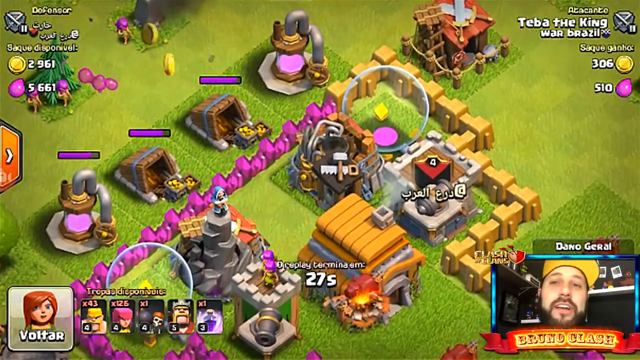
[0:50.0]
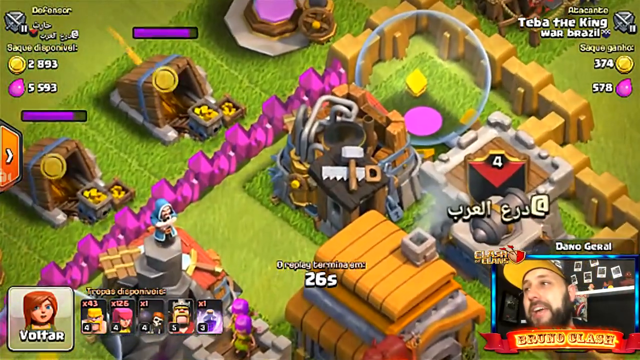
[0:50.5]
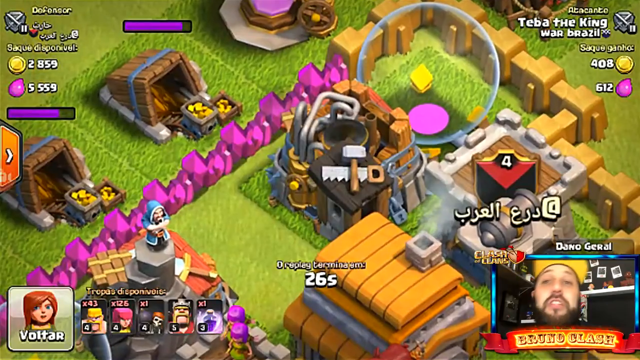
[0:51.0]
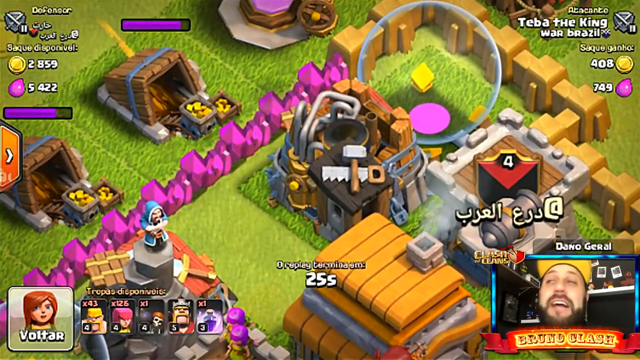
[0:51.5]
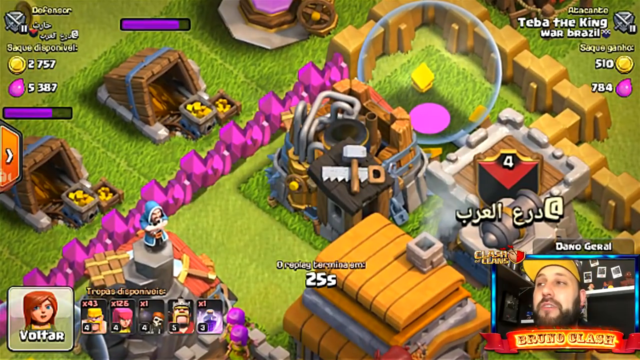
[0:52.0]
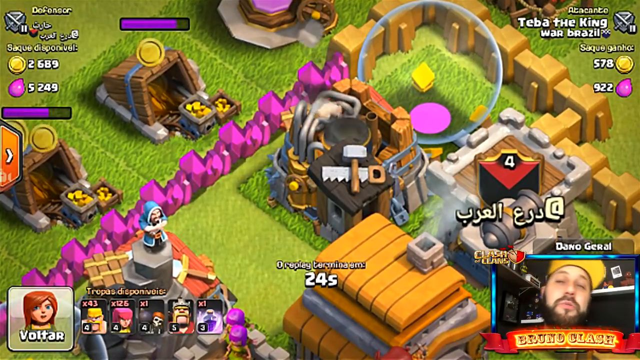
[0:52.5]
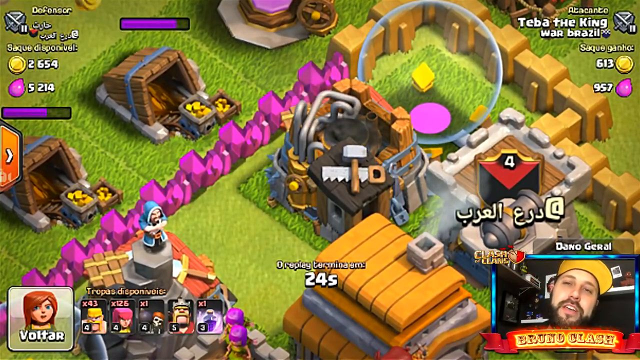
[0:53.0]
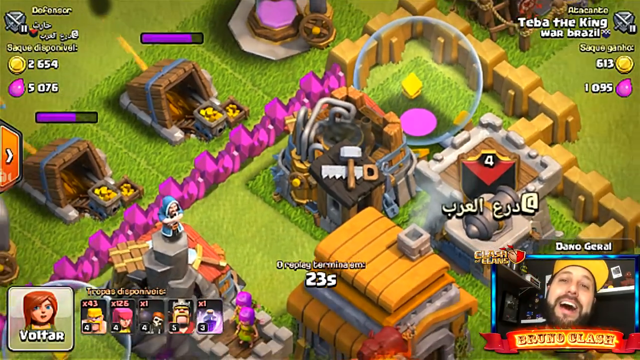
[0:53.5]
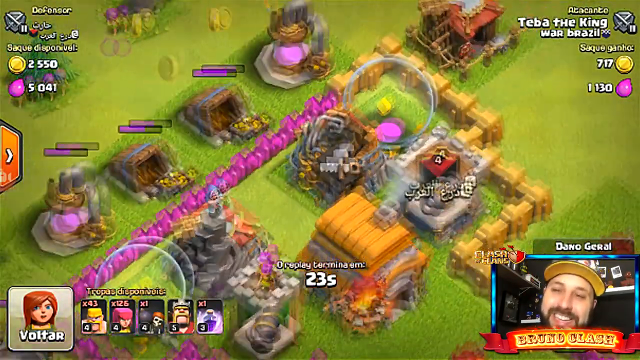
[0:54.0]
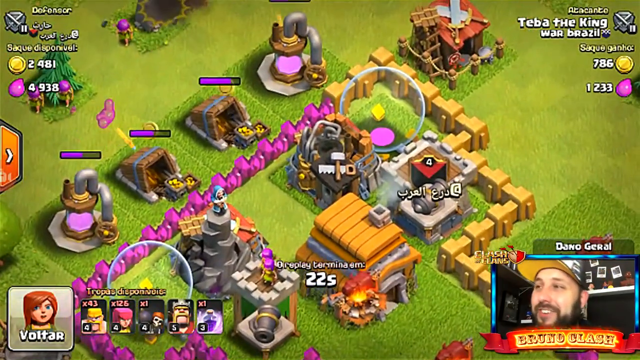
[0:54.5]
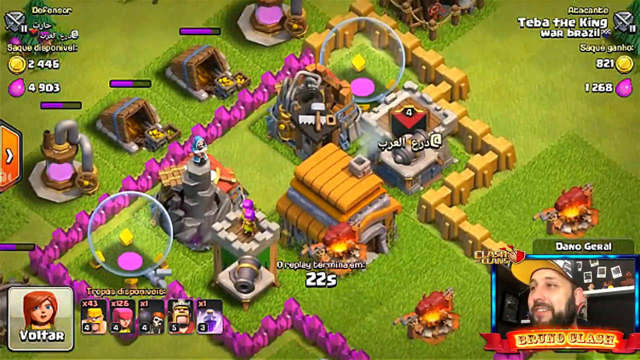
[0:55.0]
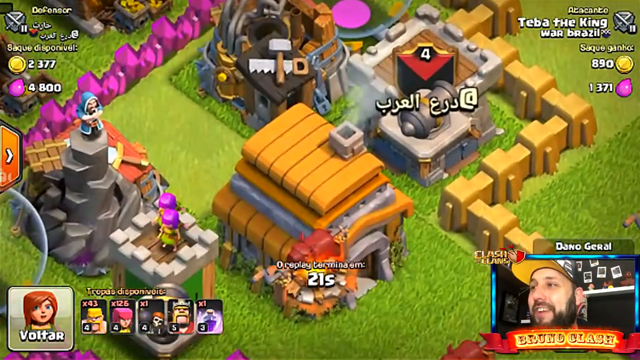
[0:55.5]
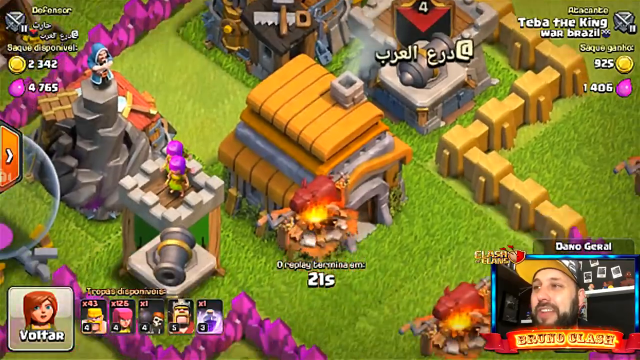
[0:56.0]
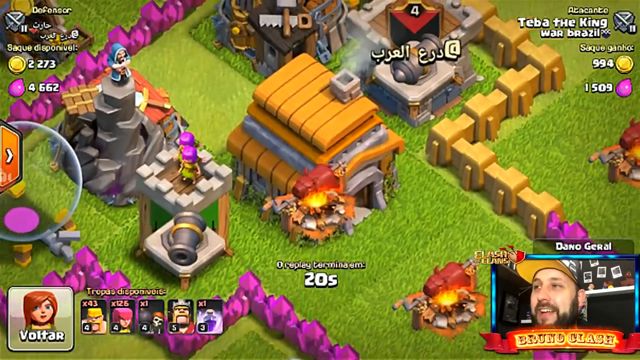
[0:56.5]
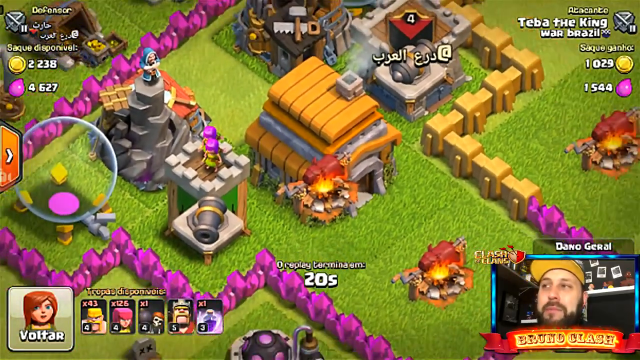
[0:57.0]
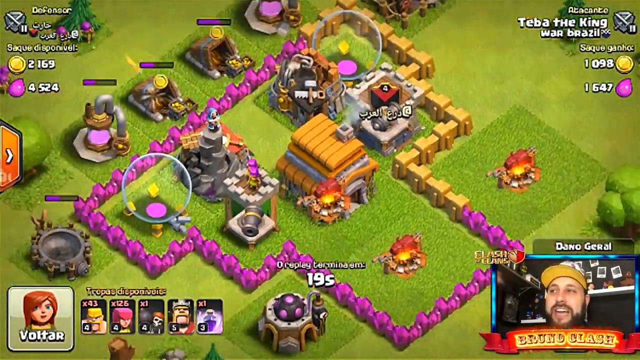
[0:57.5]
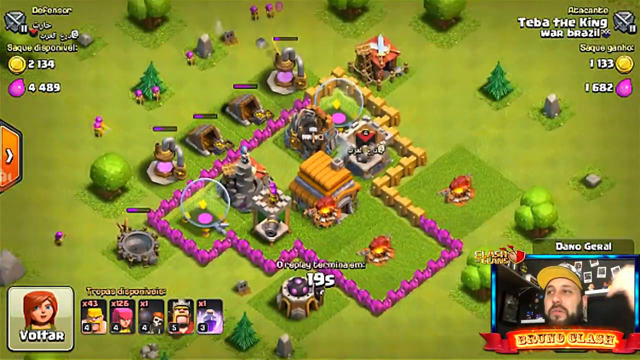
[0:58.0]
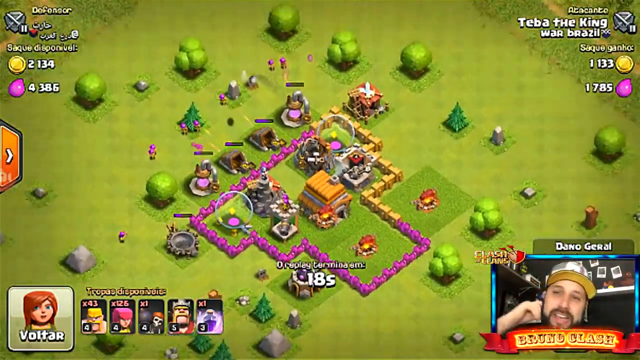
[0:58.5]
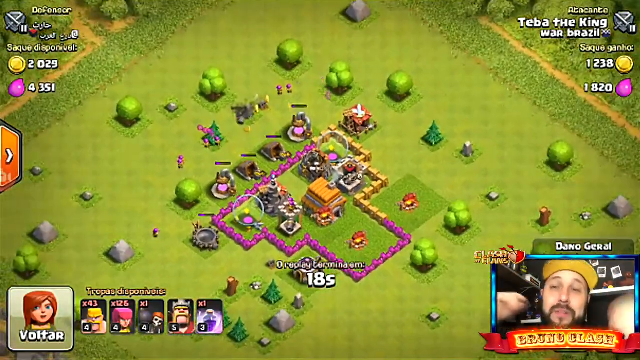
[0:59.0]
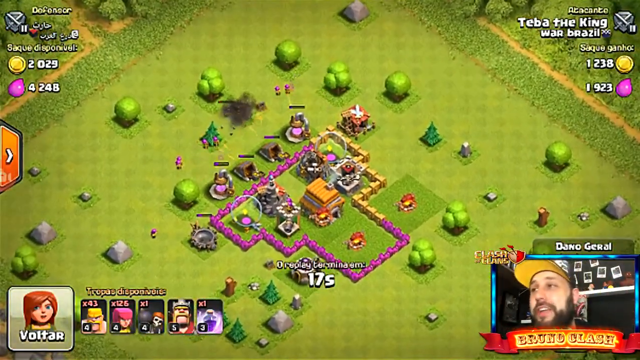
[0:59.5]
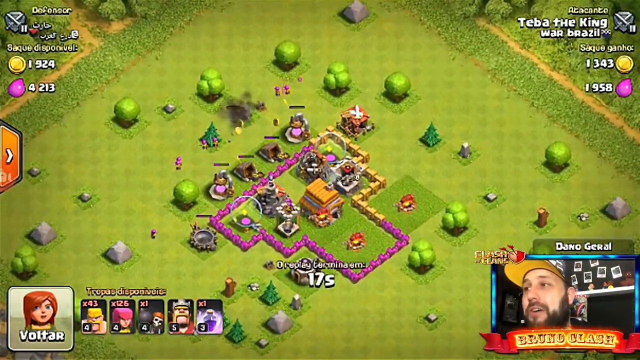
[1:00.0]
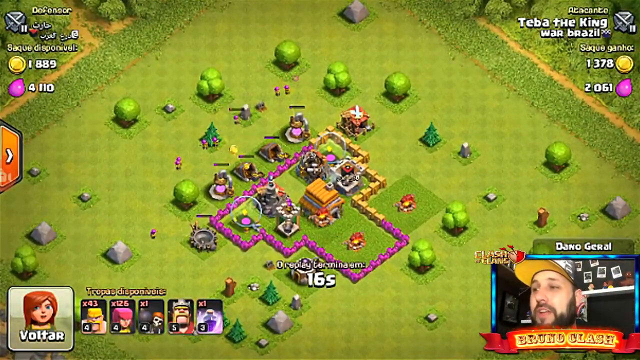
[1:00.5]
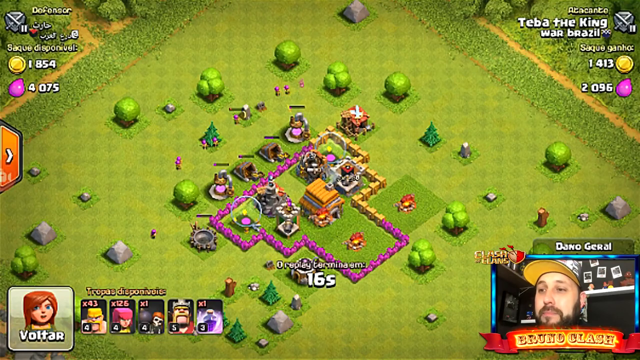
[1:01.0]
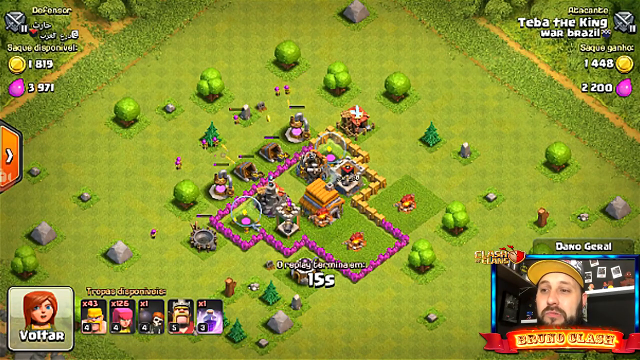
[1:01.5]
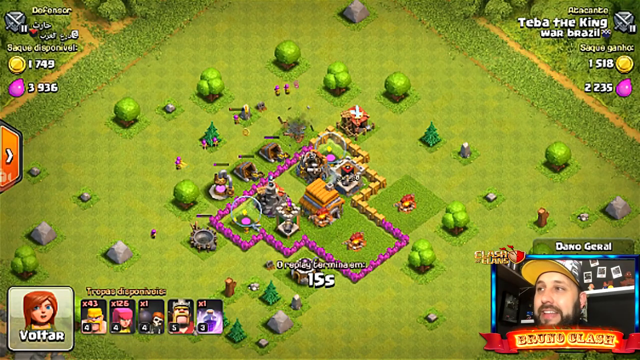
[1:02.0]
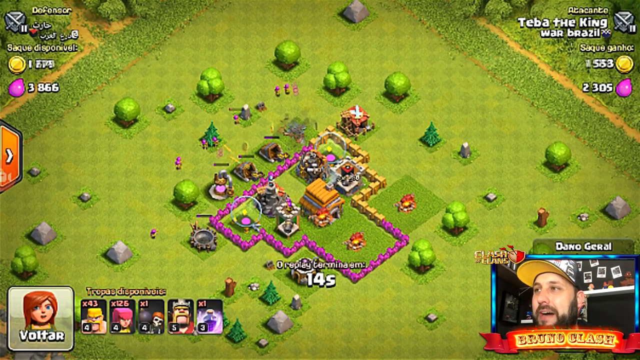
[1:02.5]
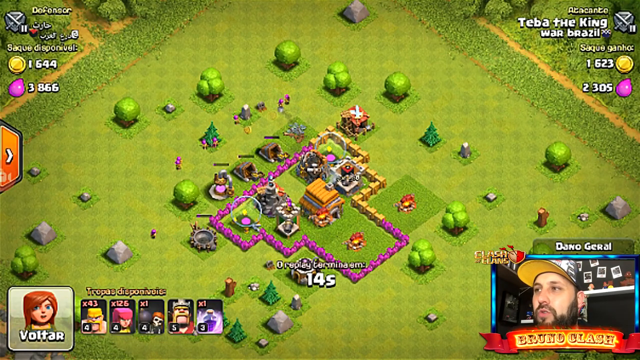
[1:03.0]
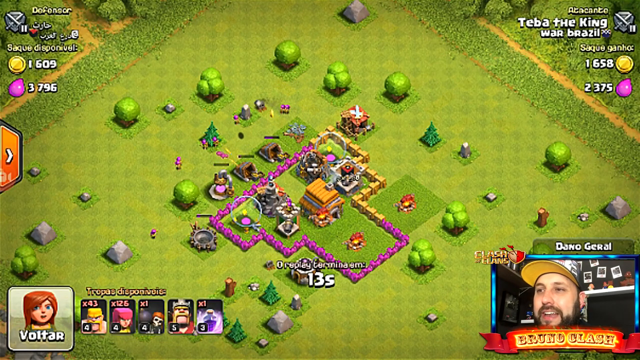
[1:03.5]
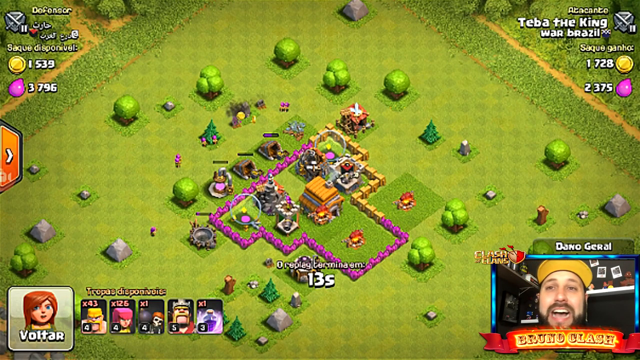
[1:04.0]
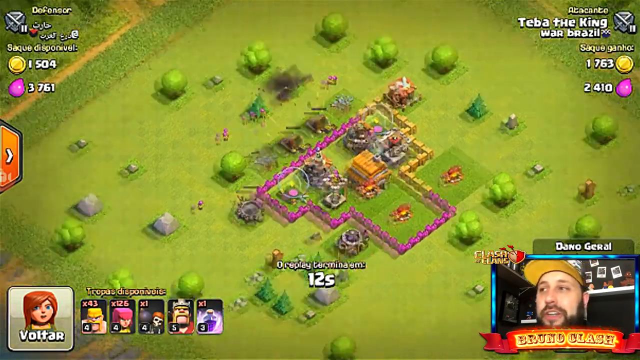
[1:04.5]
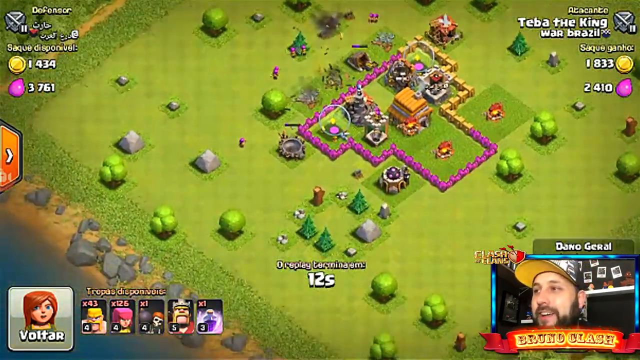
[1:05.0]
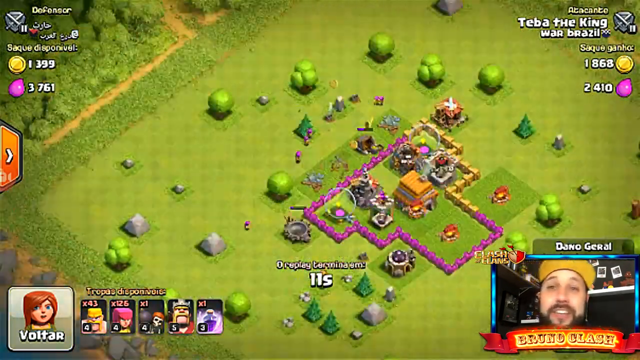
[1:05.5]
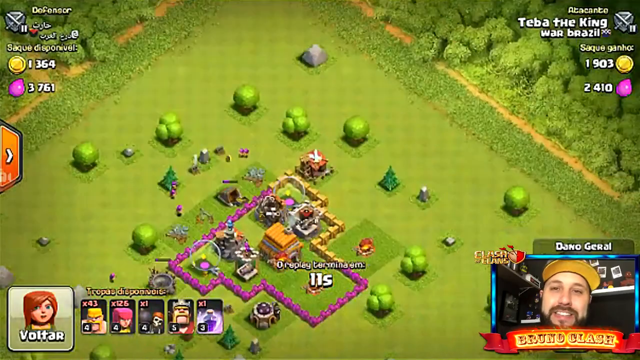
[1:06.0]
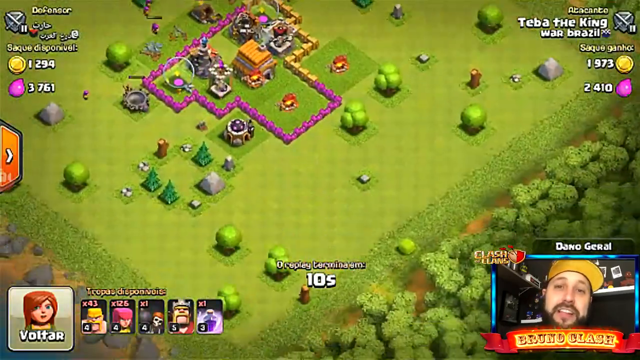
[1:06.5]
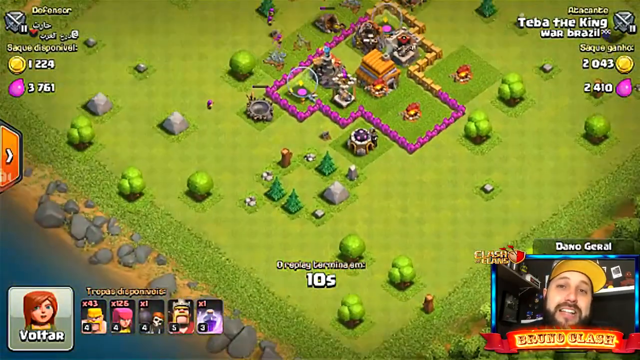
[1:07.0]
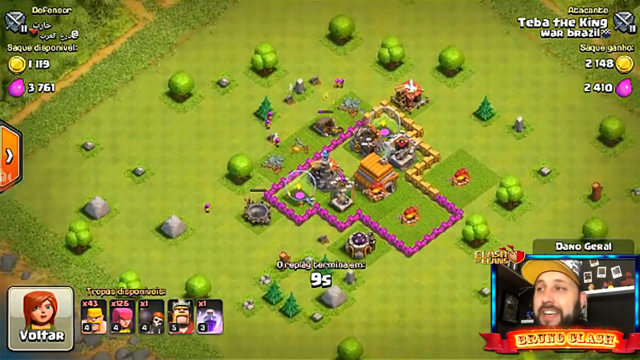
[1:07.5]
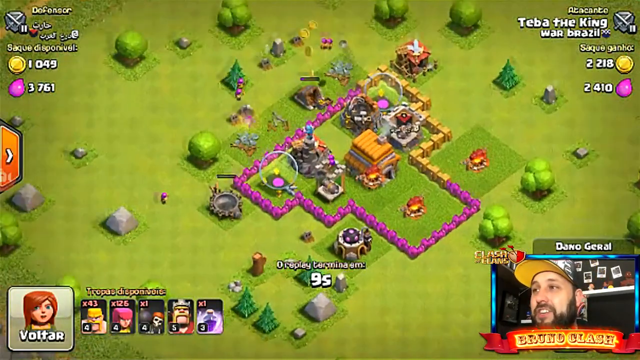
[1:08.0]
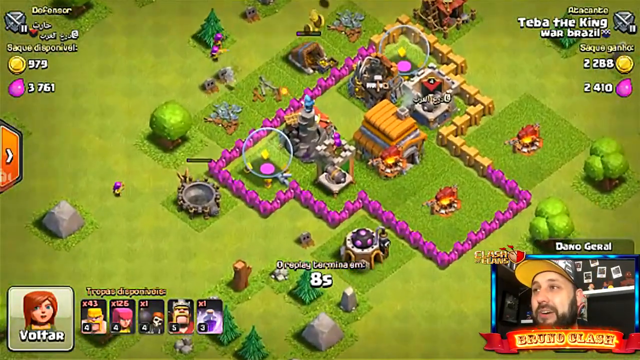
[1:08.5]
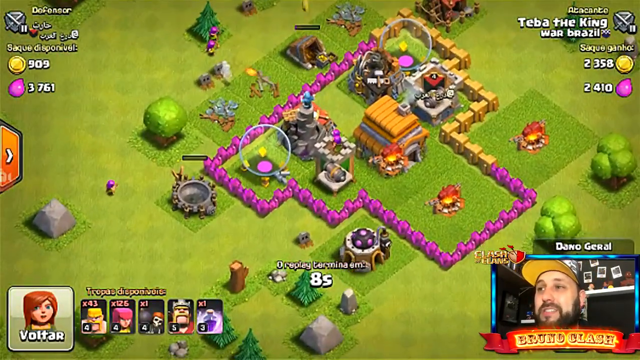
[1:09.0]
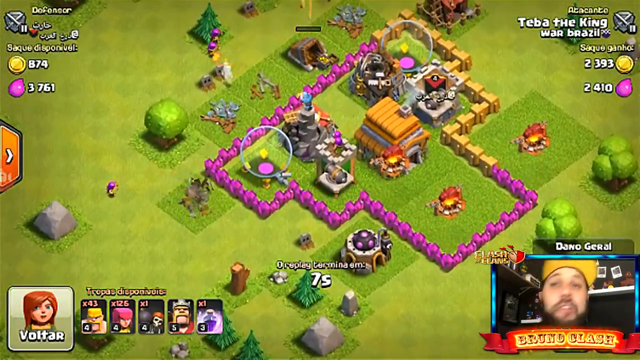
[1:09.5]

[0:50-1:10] The game remains on the same city-like screen. Projectiles keep coming in and hitting some sort of wooden boxes, with a small coin basket in front. The screen shakes somewhat, as if taking impact, and each time a projectile hits the wooden boxes, coins pop up into the air. The man scrolls around the screen, revealing some small figurines that may be the ones doing the shooting. The wooden boxes eventually explode after being hit repeatedly.